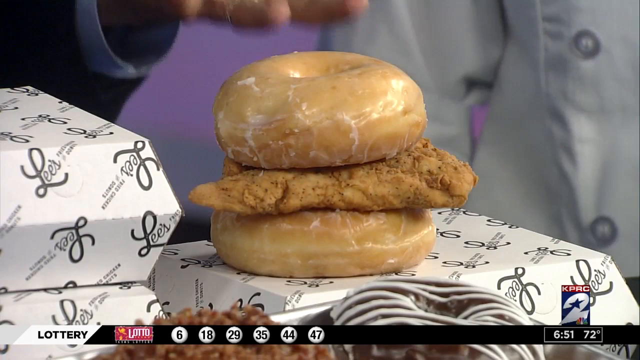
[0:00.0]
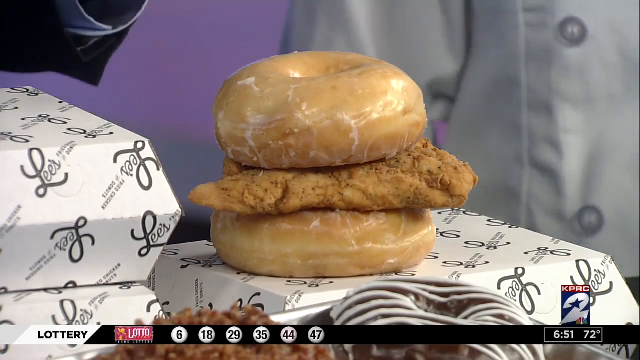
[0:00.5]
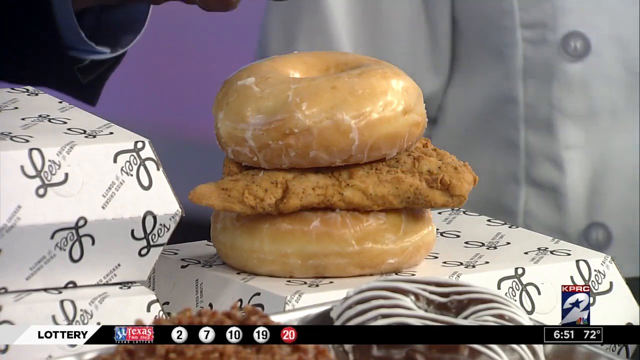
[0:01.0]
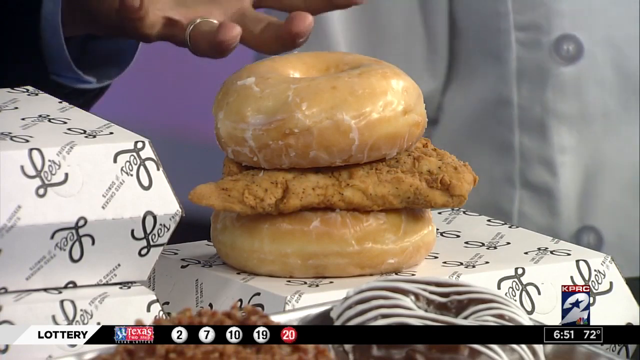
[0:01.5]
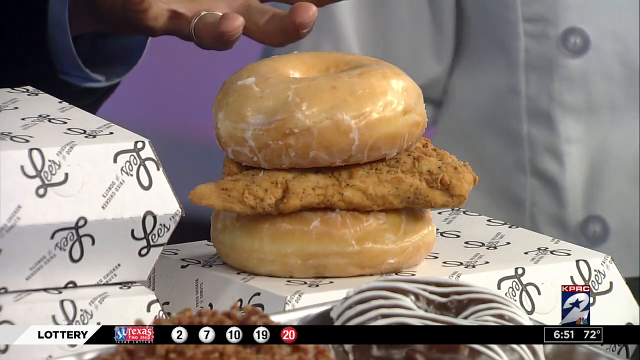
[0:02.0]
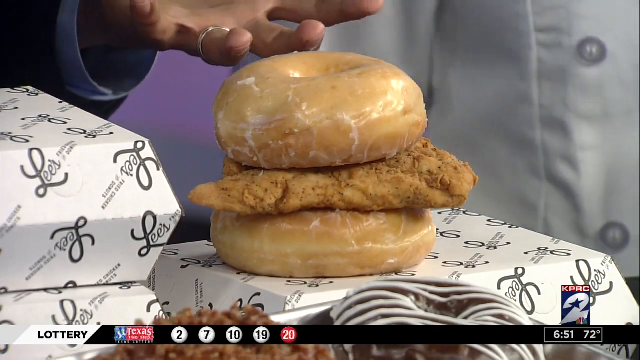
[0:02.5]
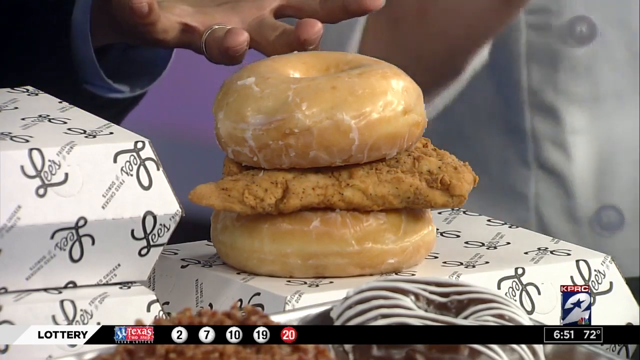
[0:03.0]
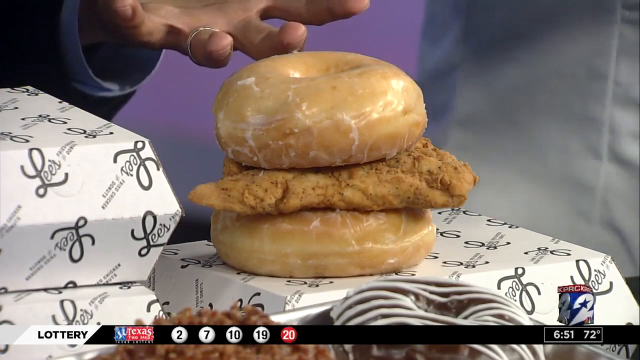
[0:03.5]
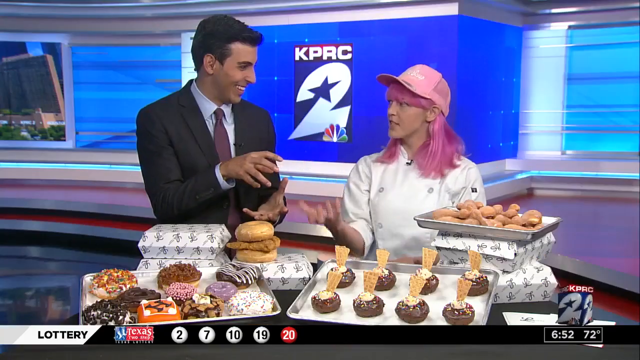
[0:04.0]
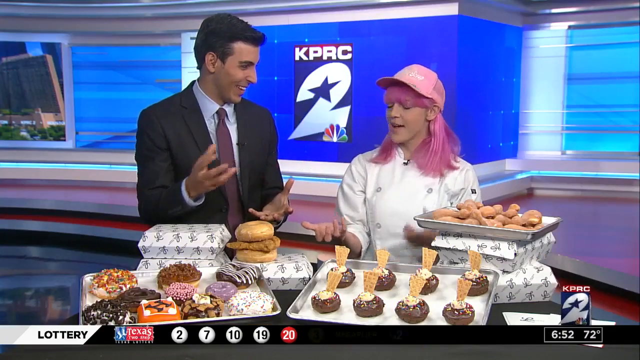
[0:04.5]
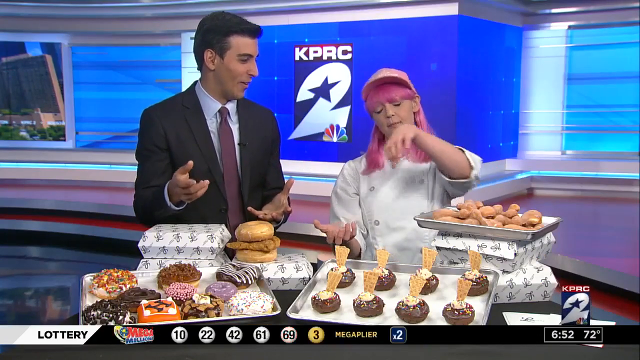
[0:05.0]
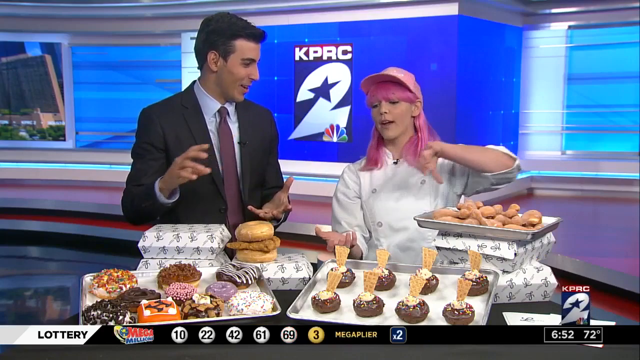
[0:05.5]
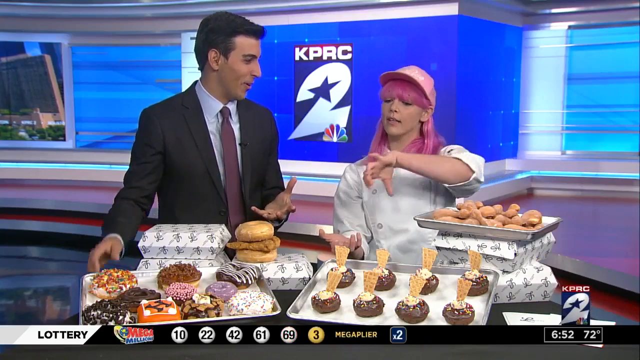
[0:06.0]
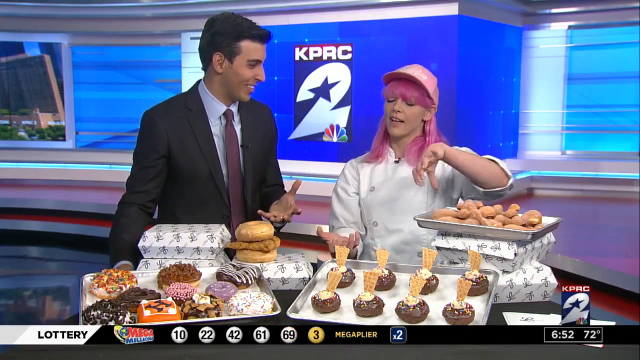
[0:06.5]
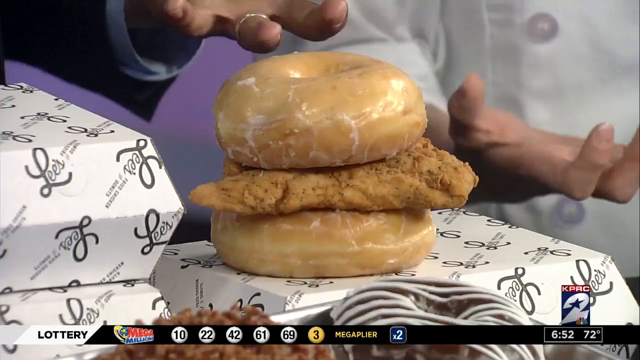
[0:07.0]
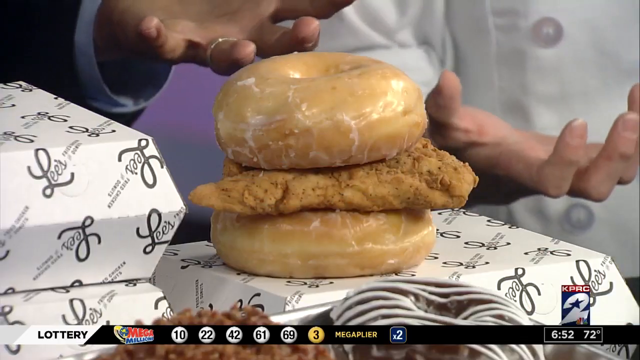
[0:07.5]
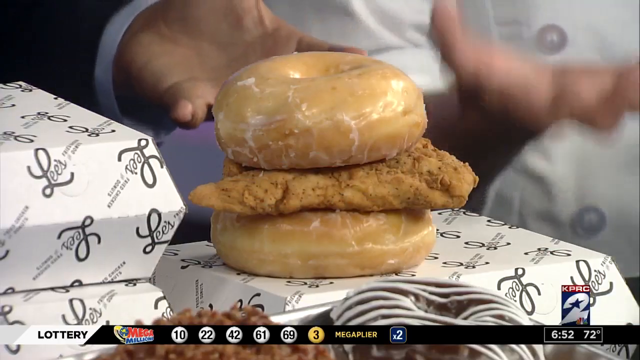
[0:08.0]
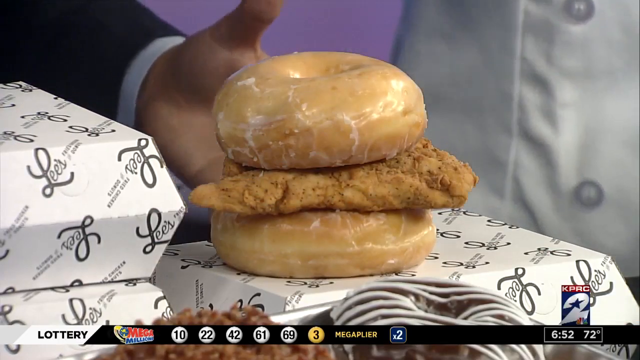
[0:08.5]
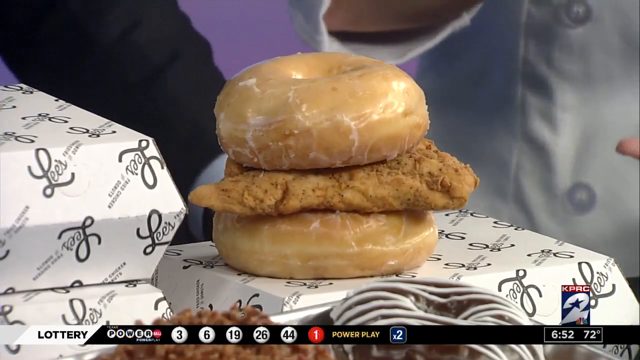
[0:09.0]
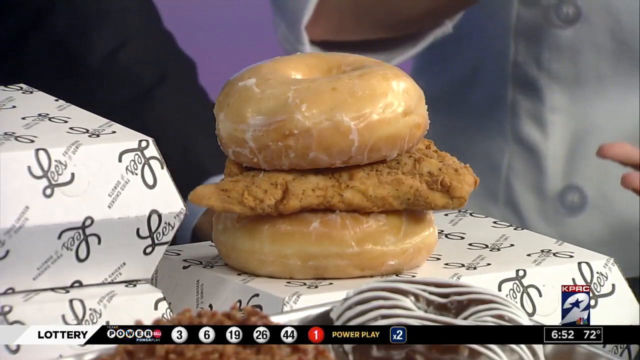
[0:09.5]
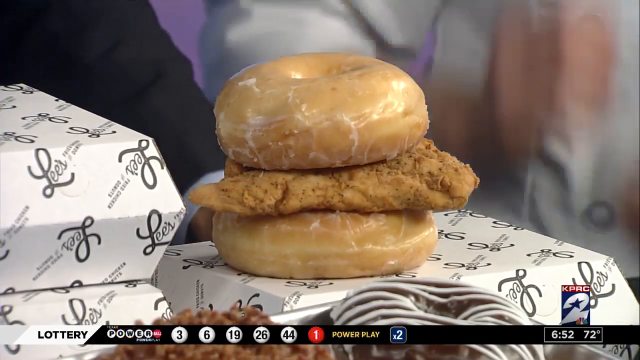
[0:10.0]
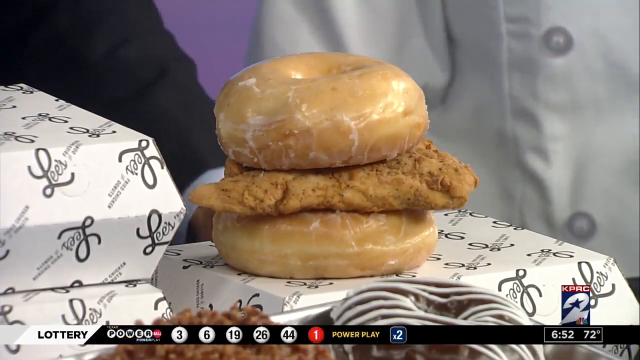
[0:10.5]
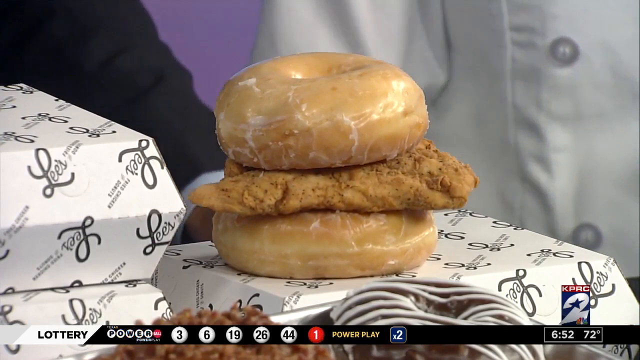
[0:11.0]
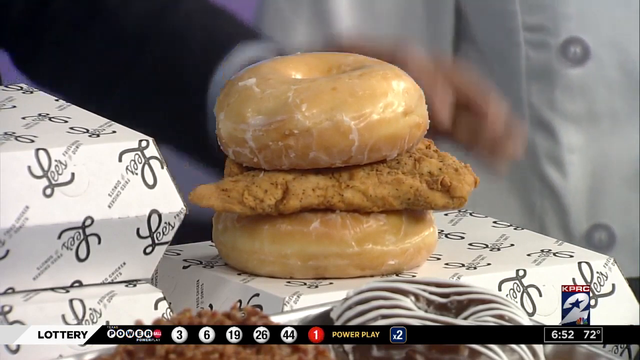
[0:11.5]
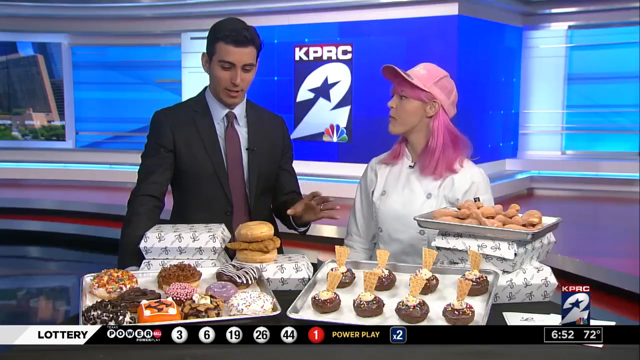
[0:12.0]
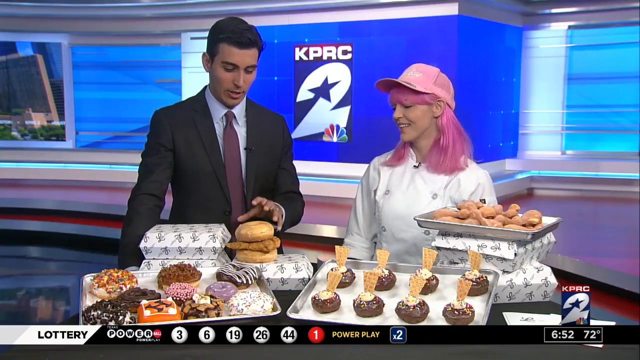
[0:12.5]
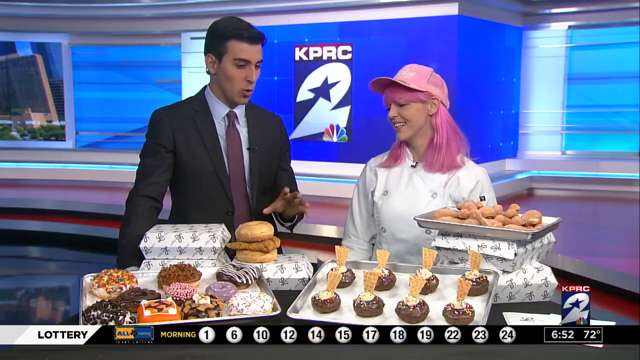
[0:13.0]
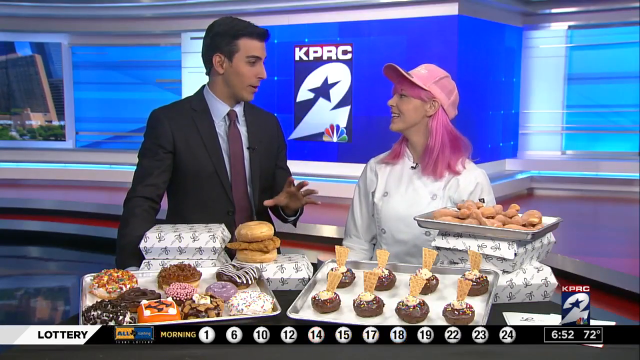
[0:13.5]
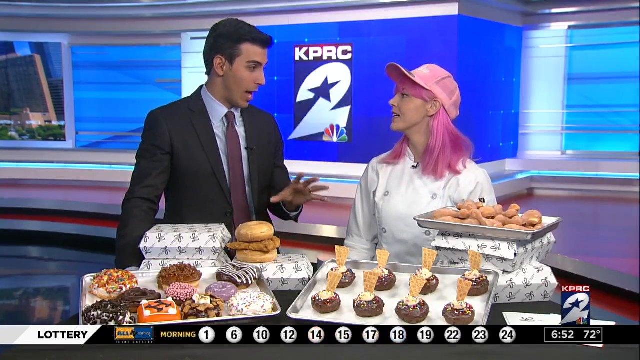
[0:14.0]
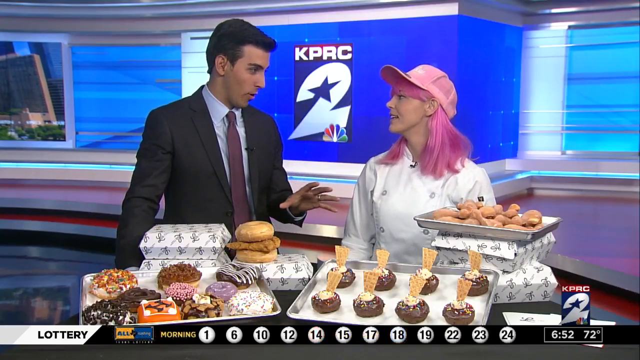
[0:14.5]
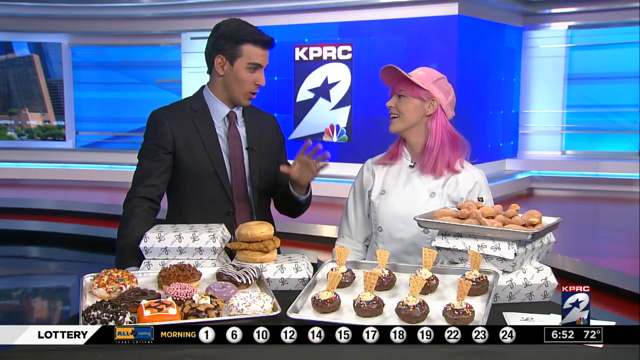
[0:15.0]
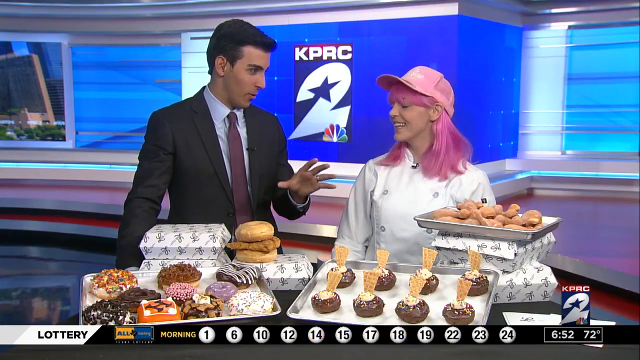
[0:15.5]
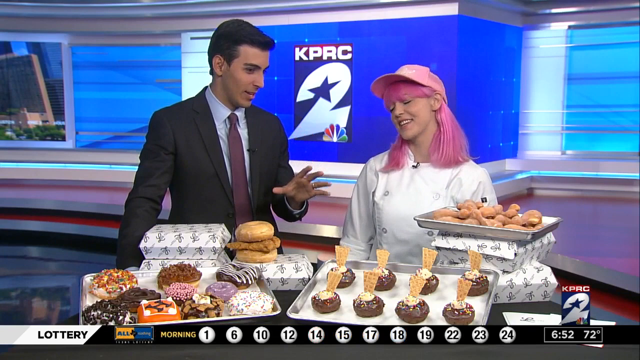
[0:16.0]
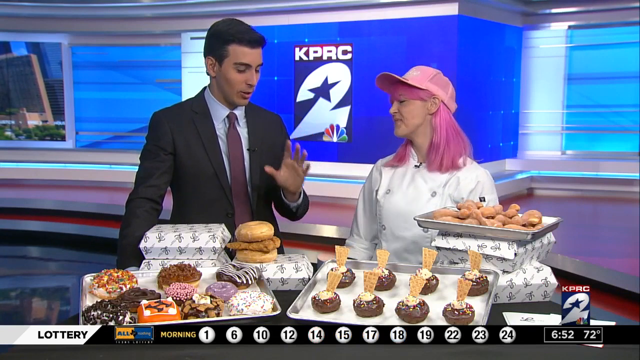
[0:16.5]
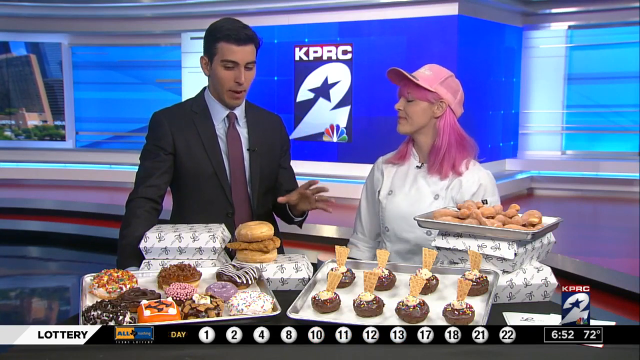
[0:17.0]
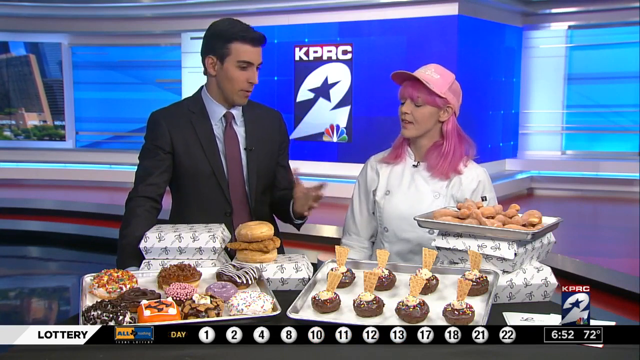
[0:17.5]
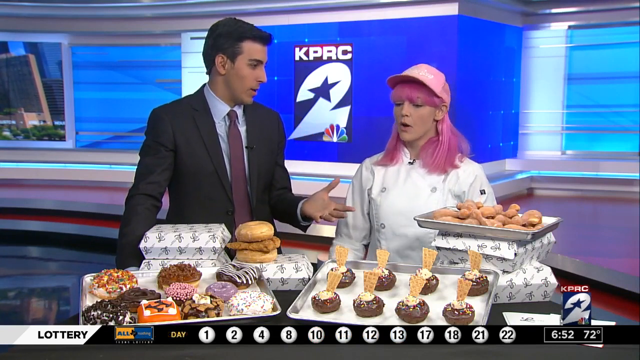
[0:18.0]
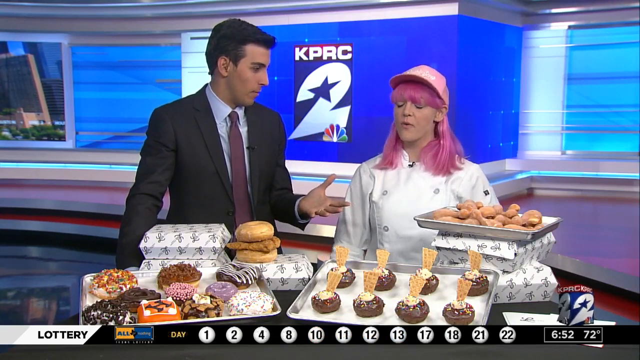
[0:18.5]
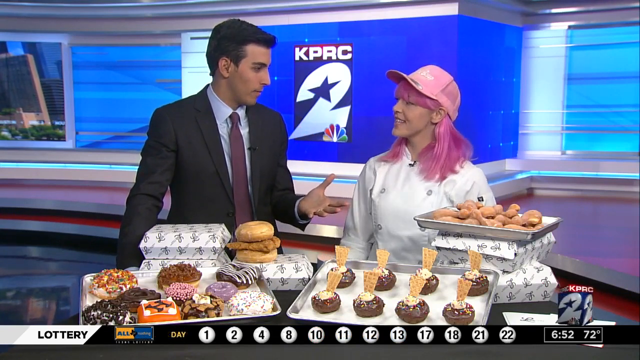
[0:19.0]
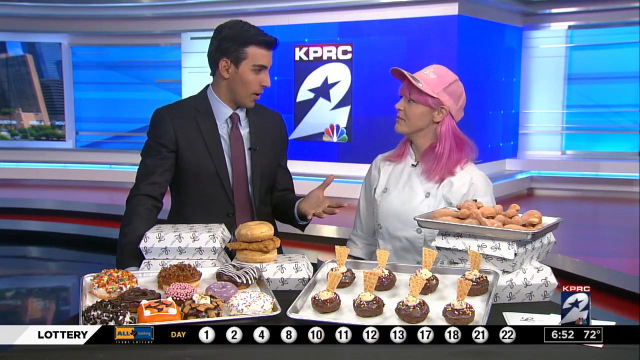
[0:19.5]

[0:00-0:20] Two donuts appear with a piece of meat placed between them. A chef is then seen explaining, and a lot of food is shown on the table where they are standing. It is a talk show, and the text "KPRC2 show" is written on screen. Another man wears a suit, which indicates he is the presenter of the show, while the chef, a woman, has come to introduce the food she makes and how it is designed. Some of the food is in boxes and some is displayed on trays.